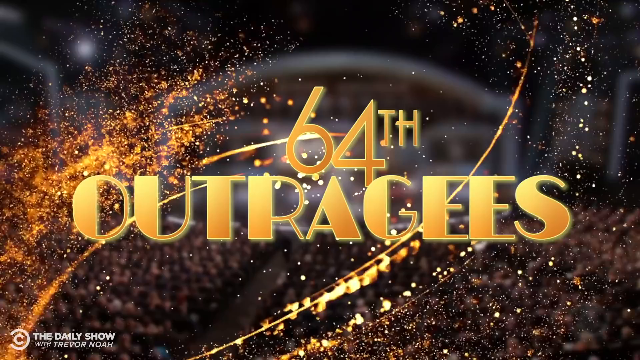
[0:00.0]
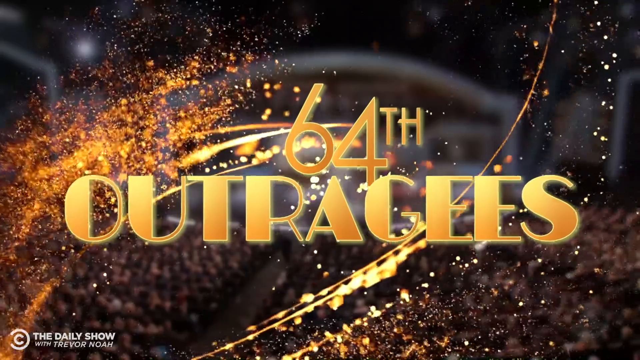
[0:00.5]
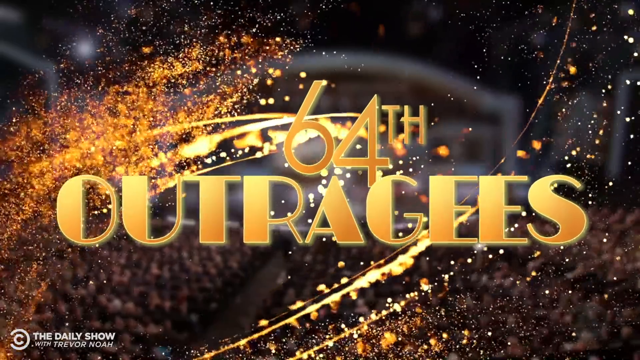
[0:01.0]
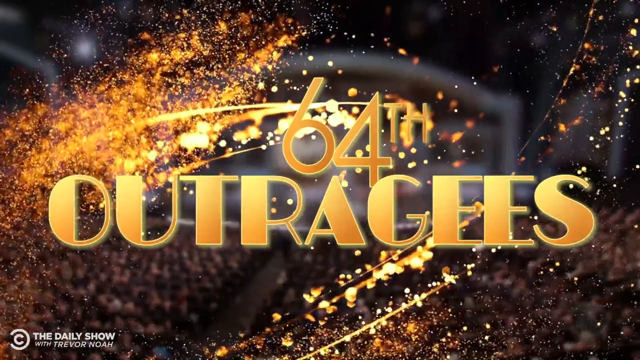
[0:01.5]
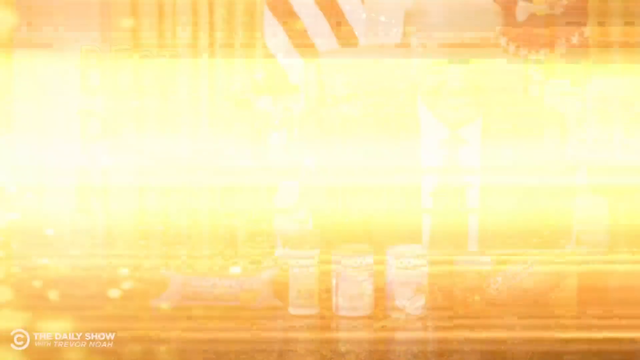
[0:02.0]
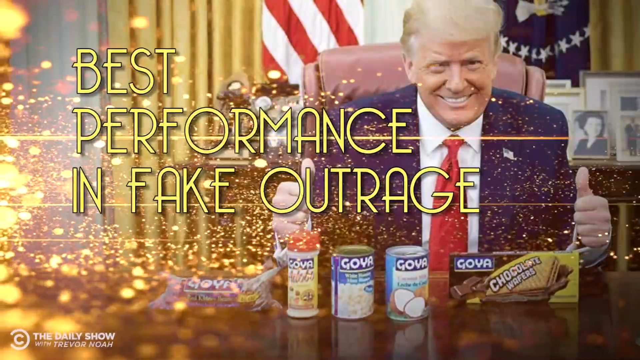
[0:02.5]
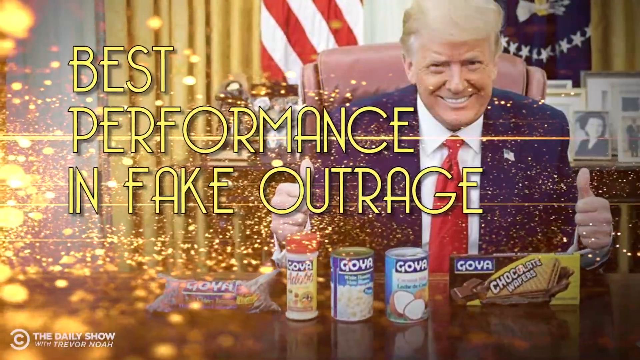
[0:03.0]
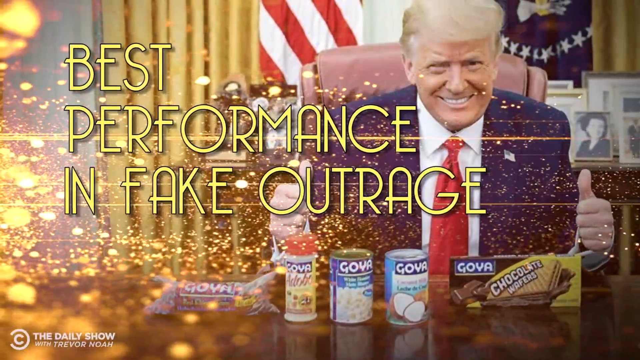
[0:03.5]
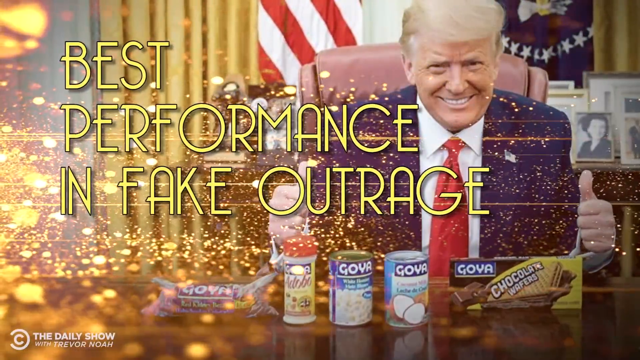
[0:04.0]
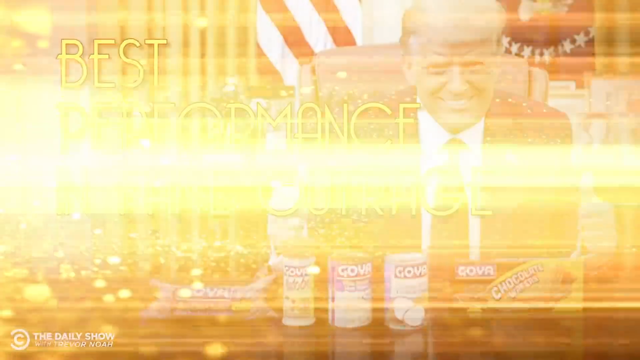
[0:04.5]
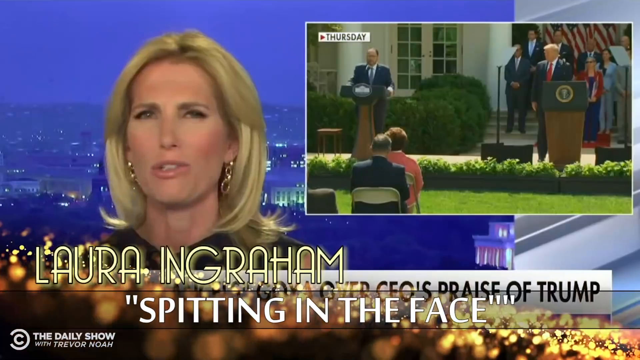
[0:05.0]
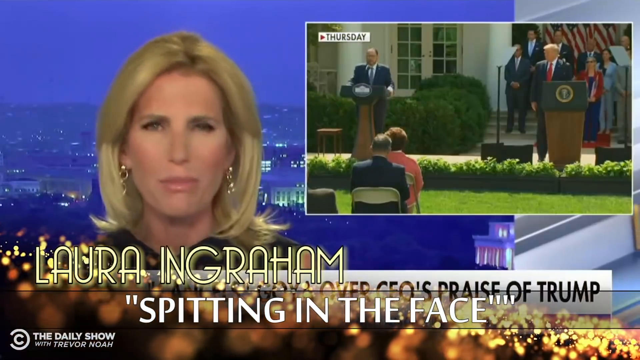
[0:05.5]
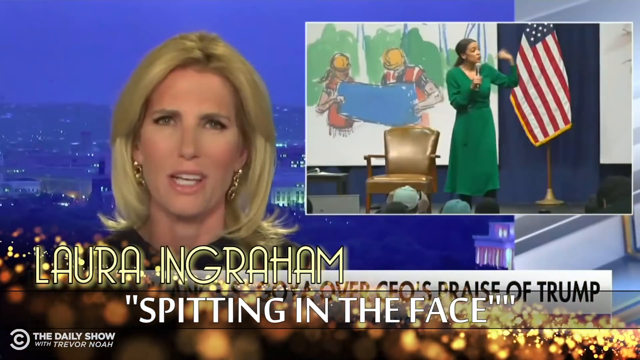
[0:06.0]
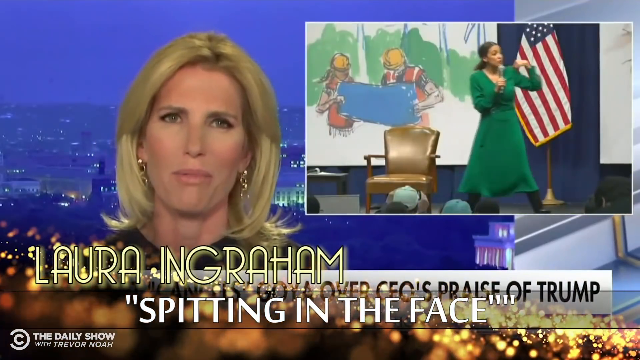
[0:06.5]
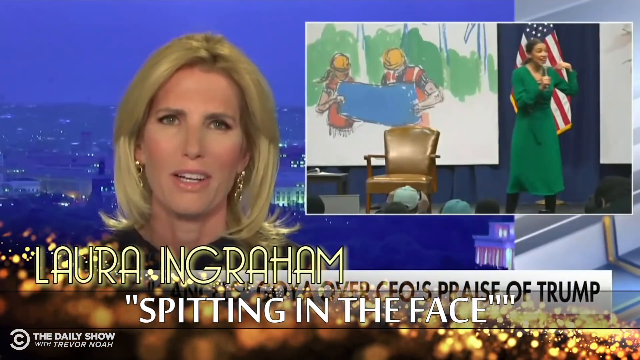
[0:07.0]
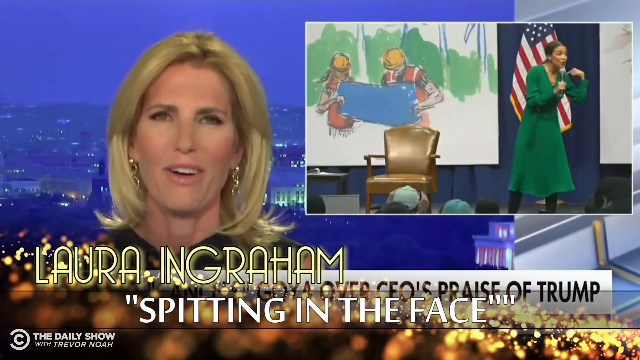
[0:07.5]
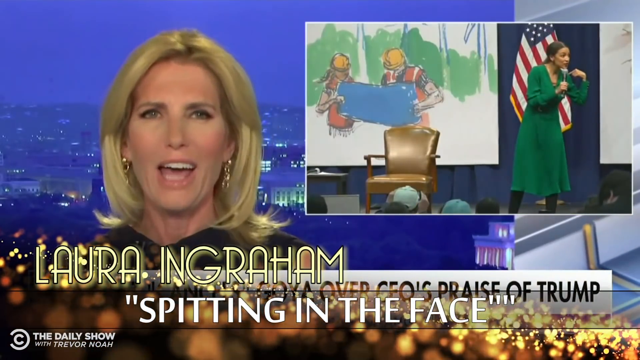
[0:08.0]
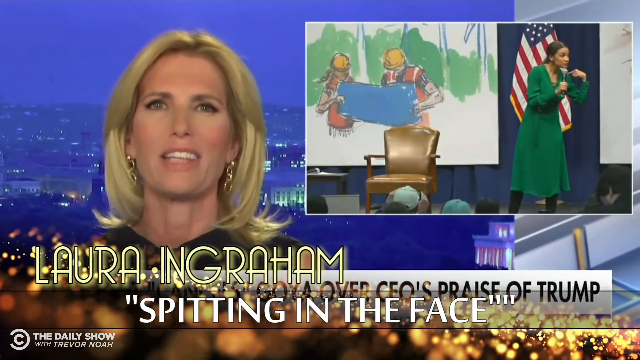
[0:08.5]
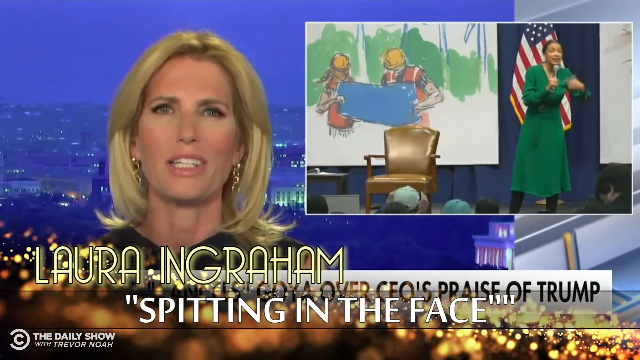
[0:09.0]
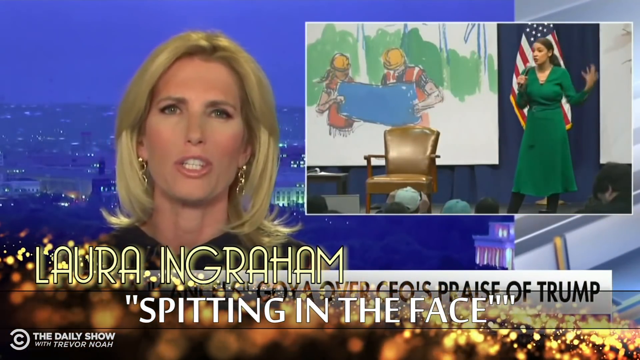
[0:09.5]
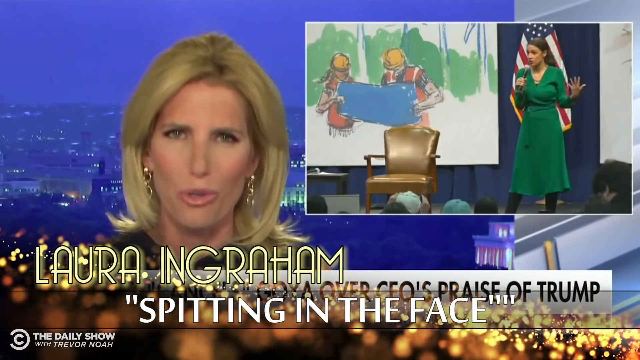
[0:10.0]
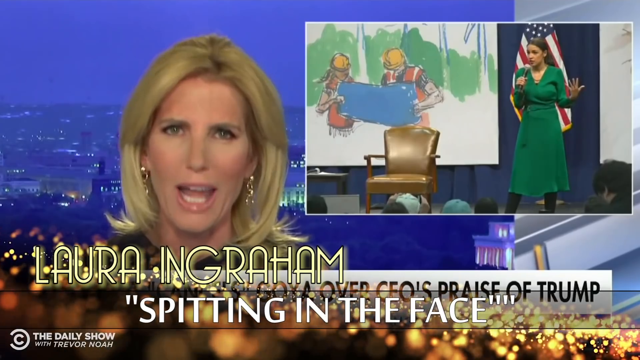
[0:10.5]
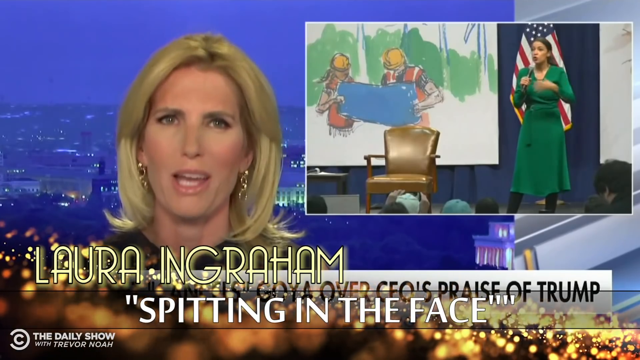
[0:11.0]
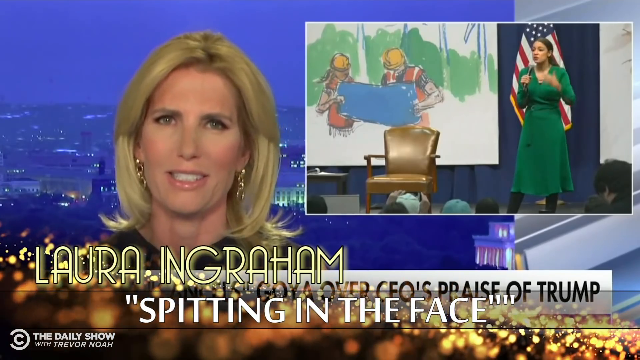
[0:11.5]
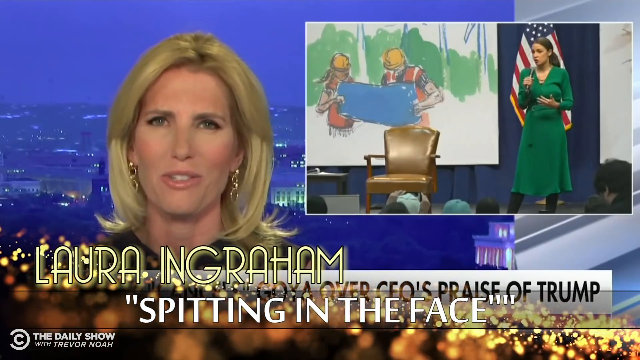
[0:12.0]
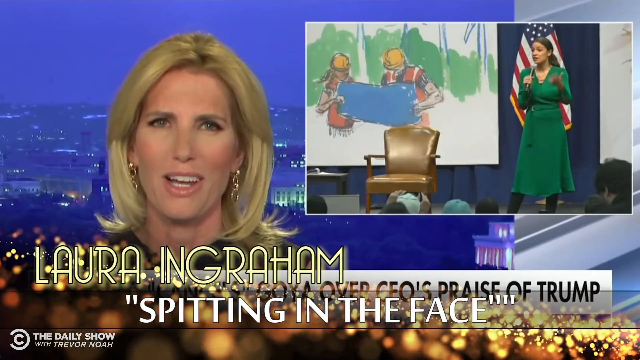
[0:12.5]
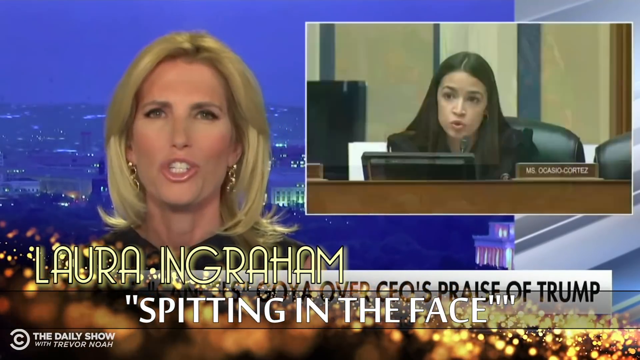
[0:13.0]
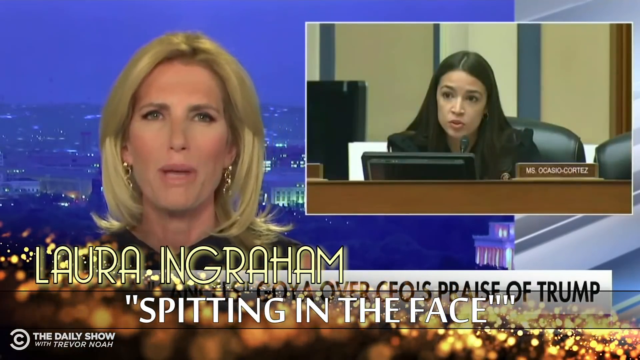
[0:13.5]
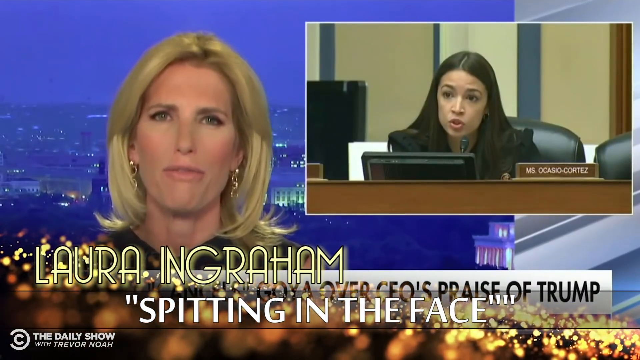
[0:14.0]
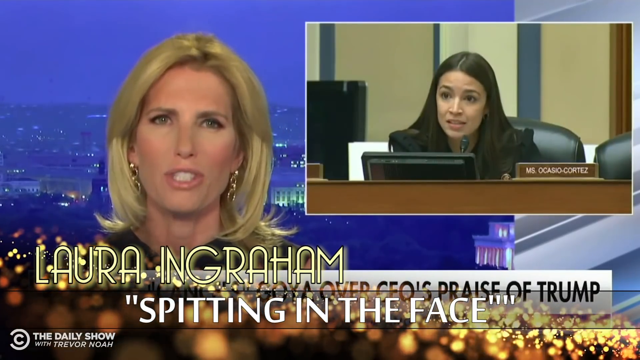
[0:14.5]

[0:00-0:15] A comedic award show called the 64th Annual Outragees begins, with a Comedy Central logo visible in the bottom left corner. The award is "Best Performance in Fake Outrage," and as the award text appears there is an image of President Donald Trump in front of some Goya products. The first nominee is apparently Laura Ingram, with text that says "spitting in the face." Clips follow: it looks like AOC is talking, and Laura Ingram is making some kind of comment about Ms. Ocasio-Cortez.